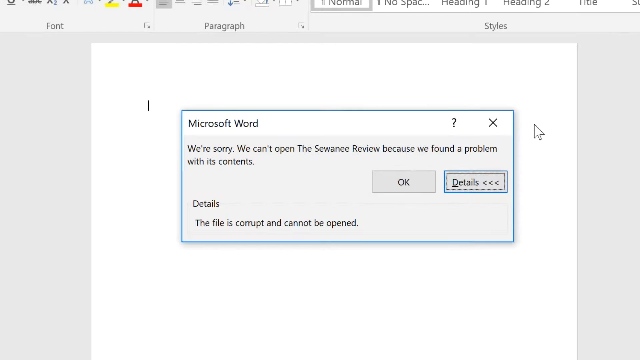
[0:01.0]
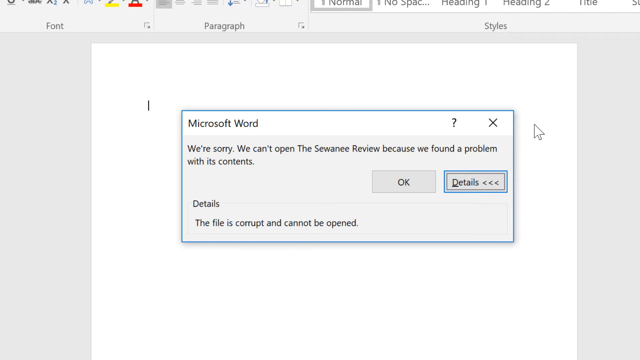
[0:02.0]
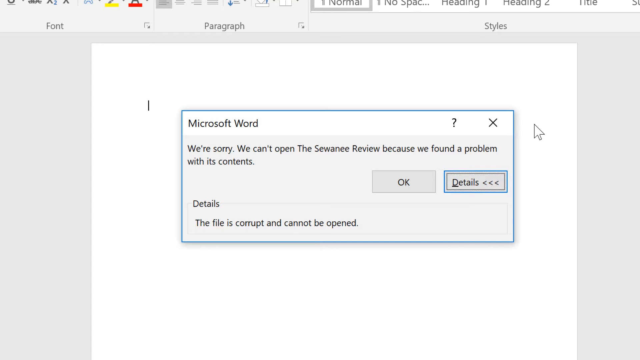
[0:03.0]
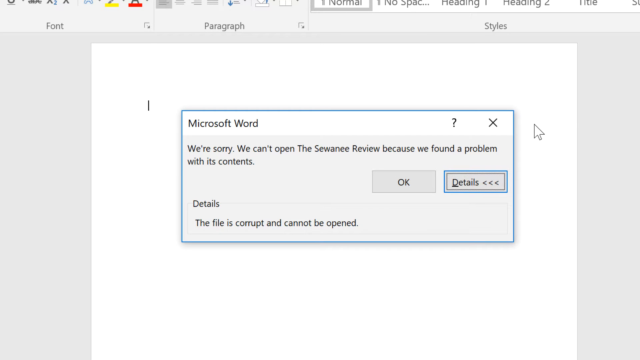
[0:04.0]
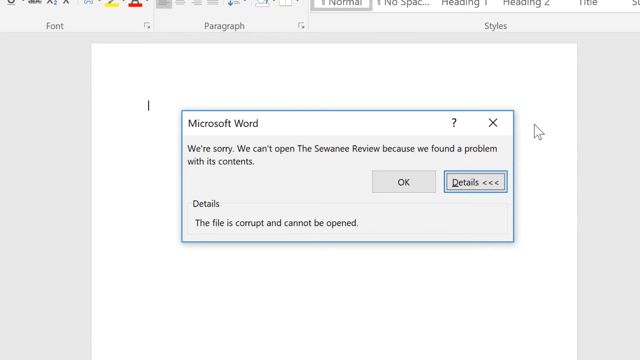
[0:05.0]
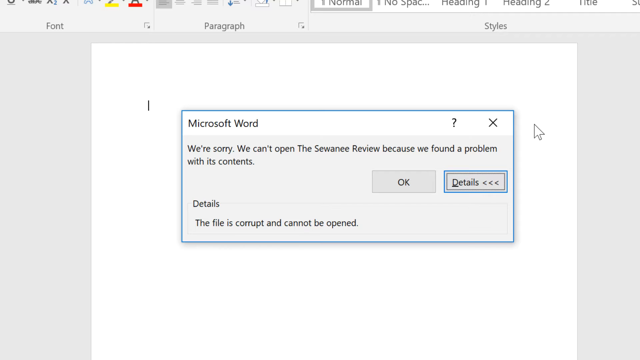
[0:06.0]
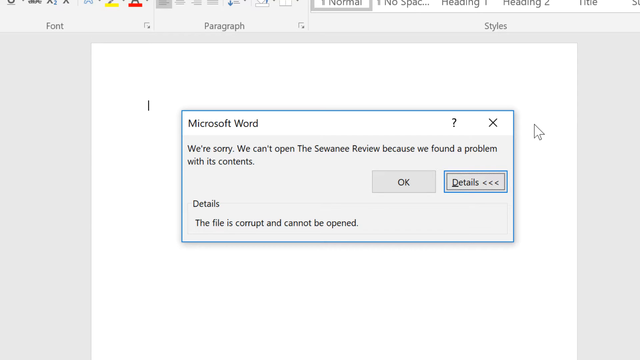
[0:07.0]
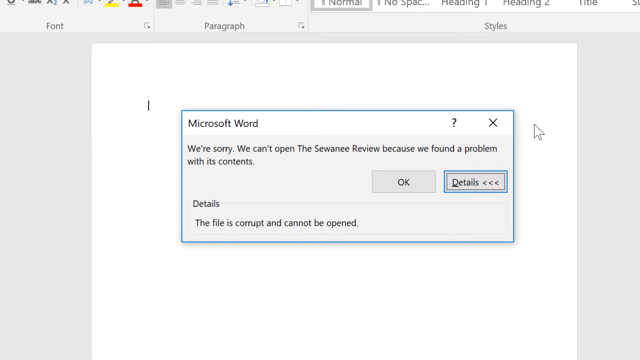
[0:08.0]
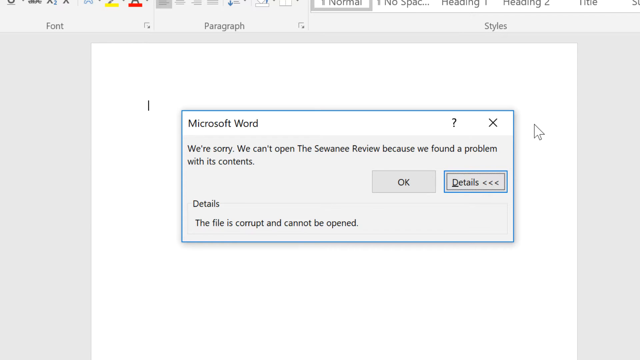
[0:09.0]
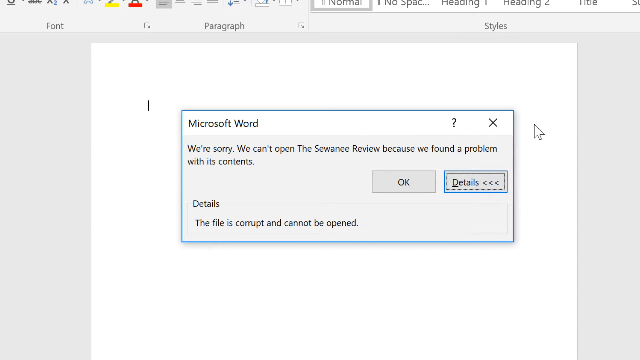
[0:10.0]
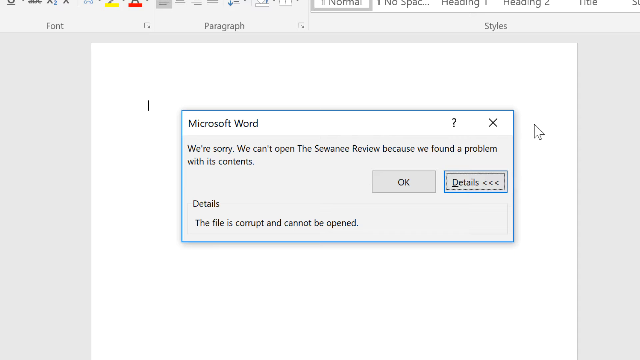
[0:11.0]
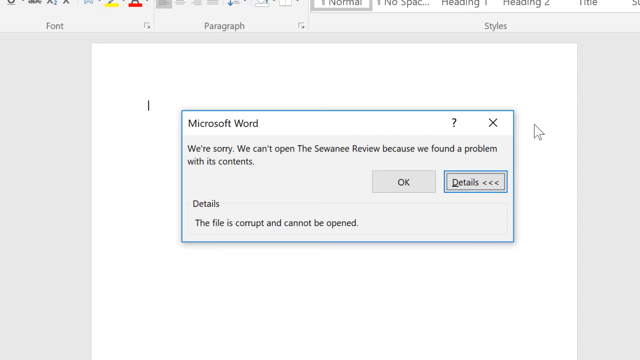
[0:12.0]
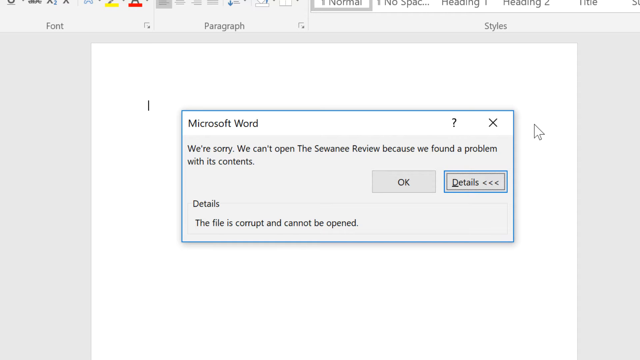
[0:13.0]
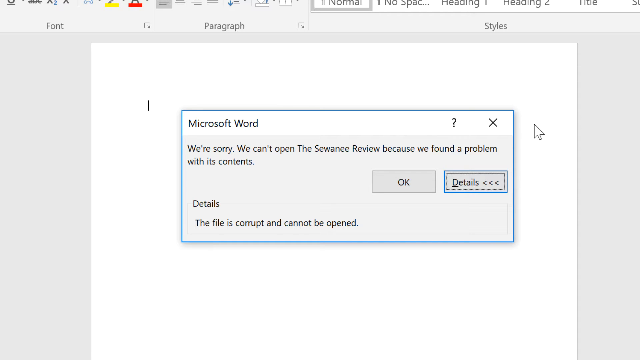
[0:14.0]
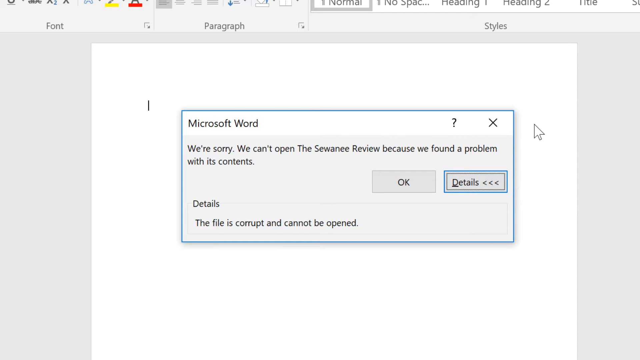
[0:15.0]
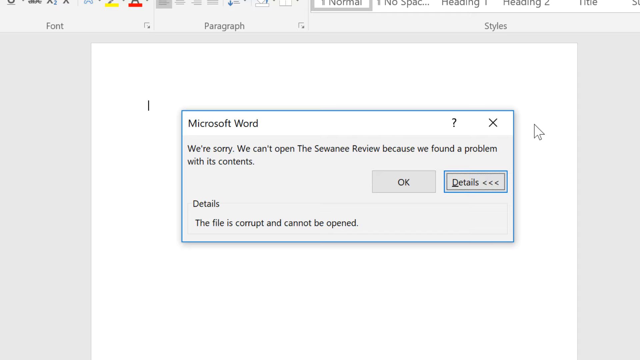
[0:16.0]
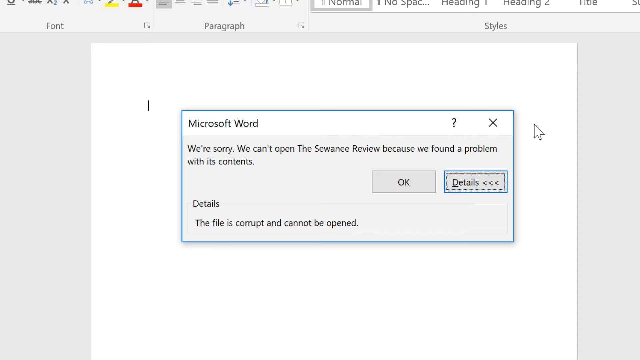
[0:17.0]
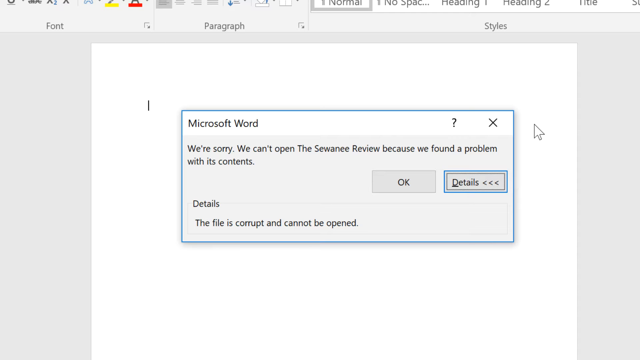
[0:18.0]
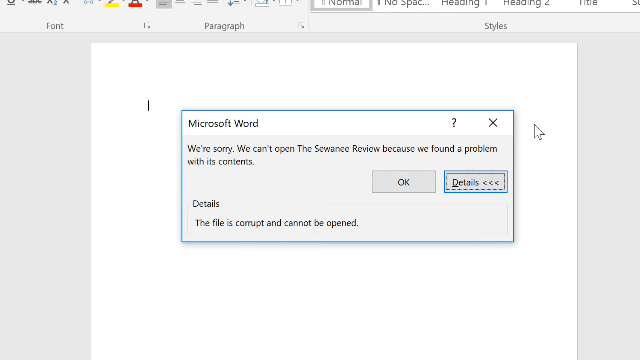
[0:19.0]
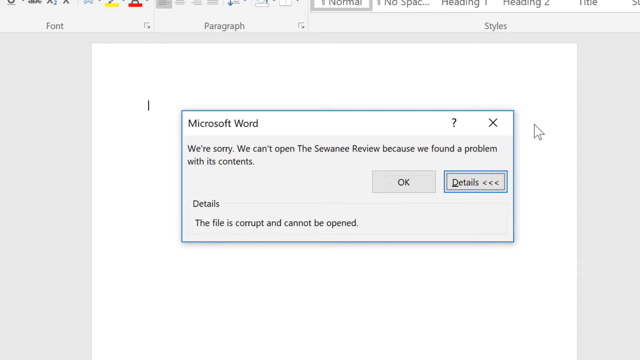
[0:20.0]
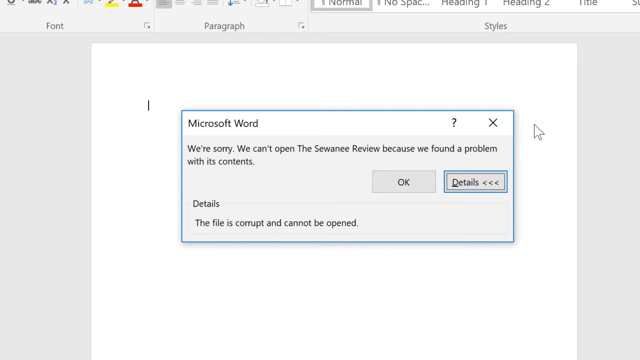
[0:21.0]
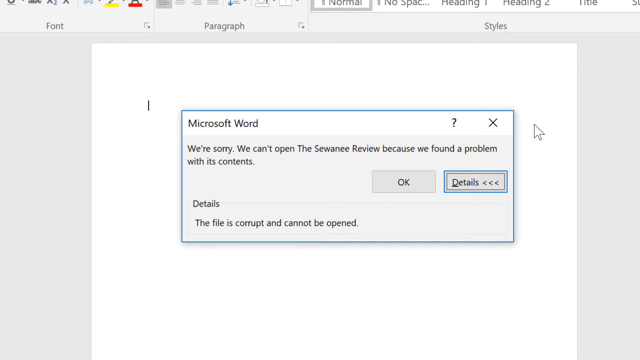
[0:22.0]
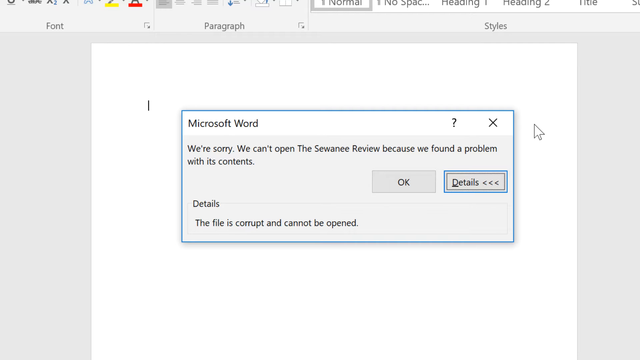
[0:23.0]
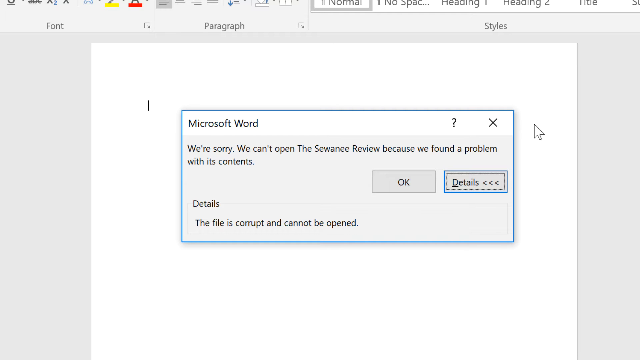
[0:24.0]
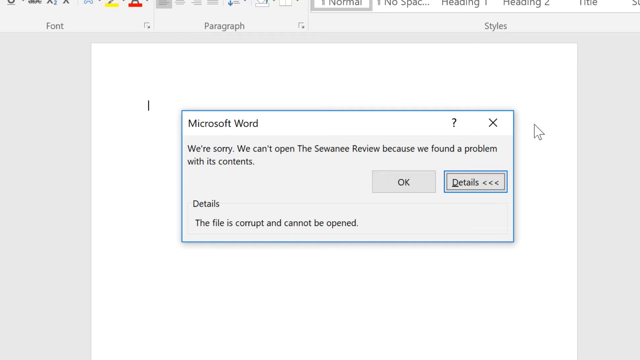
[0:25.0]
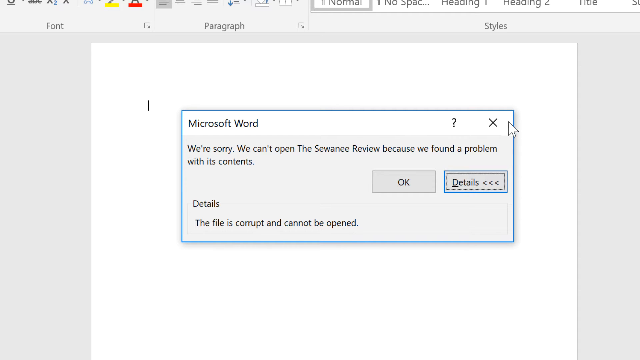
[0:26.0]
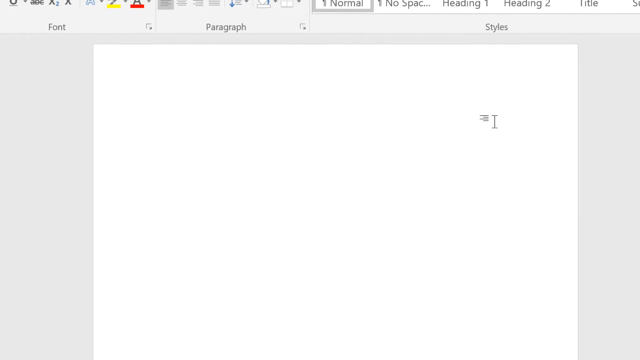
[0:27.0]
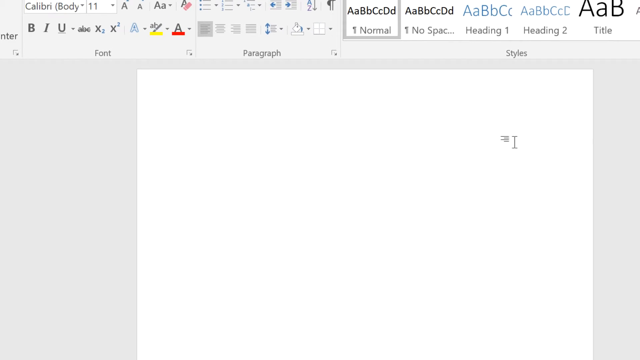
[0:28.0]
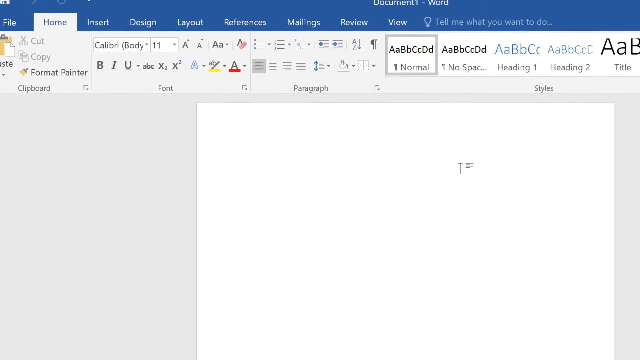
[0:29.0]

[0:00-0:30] Microsoft Word is open on a white document, with a pop-up dialog box in the middle of the screen that reads "Microsoft Word. We're sorry, we can't open the Sewanee review because we found a problem with its content." The box offers the choices OK or Details. The user appears to have clicked Details, since the Details button is highlighted with a blue line around it, and beneath it a Details box explains that the file is corrupt and cannot be opened. The user then clicks the X and closes the dialog box.